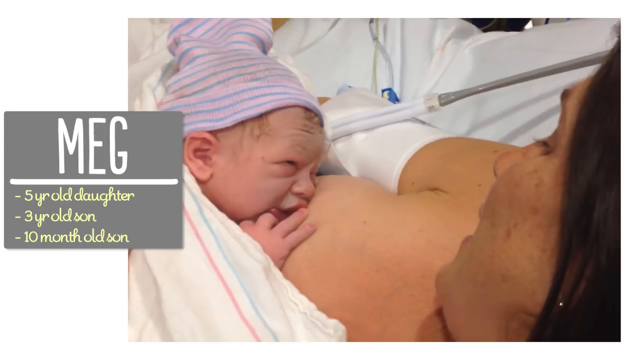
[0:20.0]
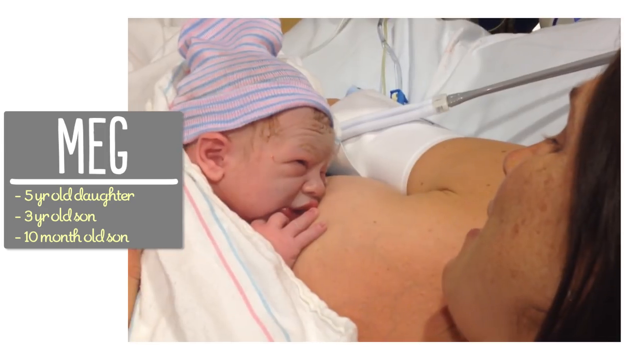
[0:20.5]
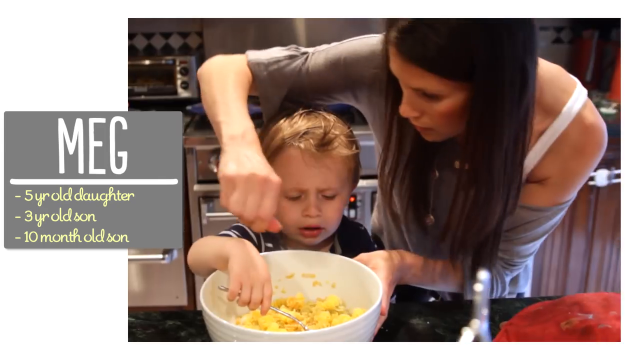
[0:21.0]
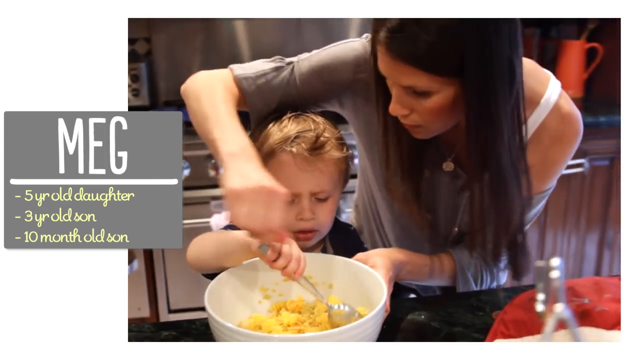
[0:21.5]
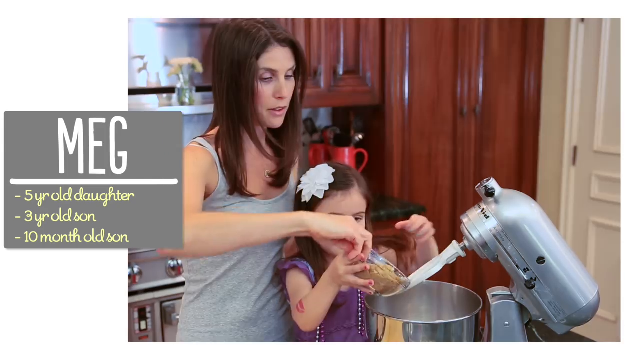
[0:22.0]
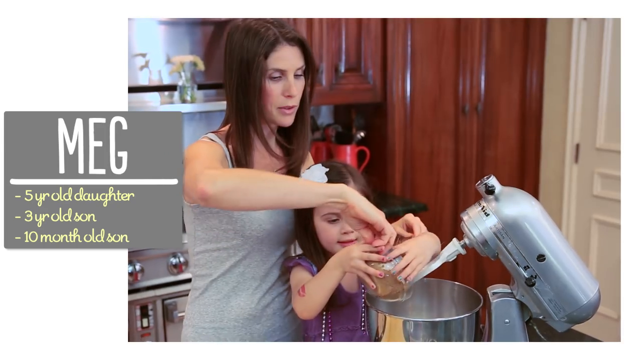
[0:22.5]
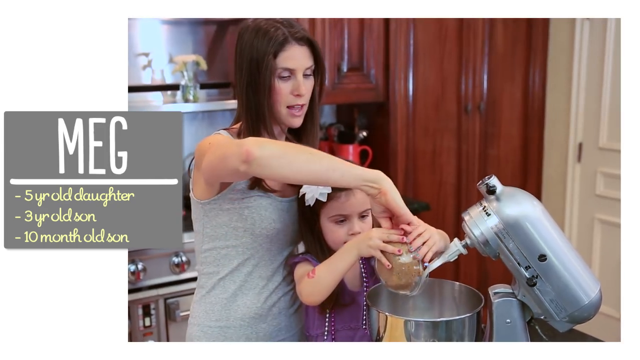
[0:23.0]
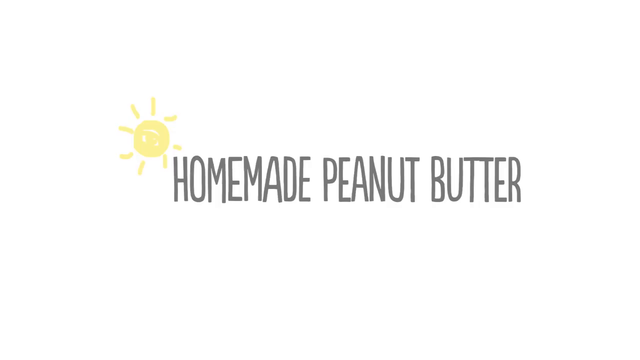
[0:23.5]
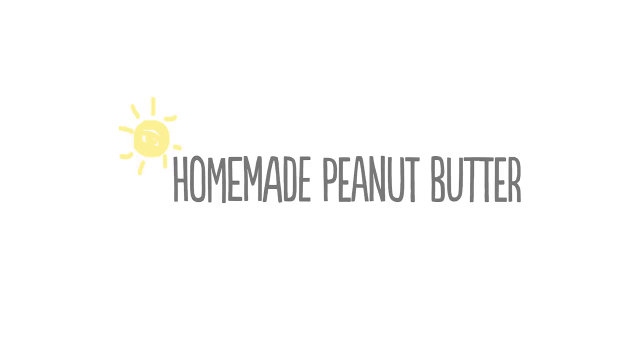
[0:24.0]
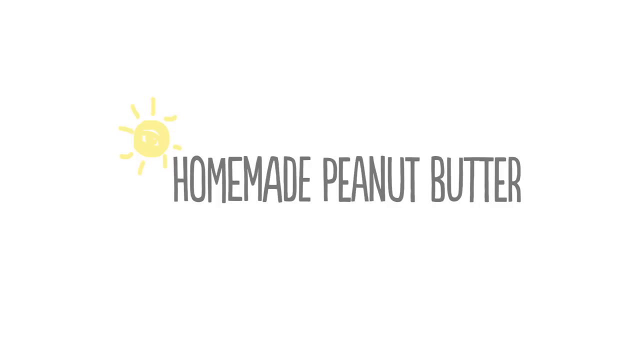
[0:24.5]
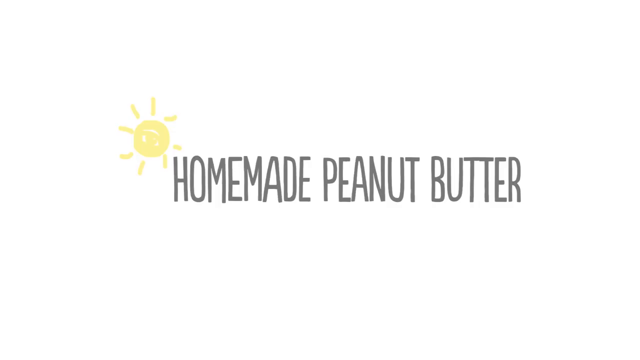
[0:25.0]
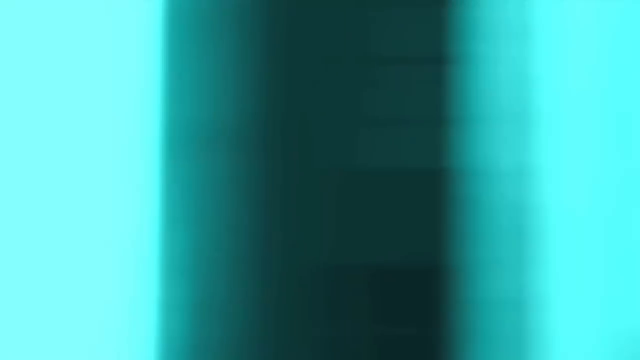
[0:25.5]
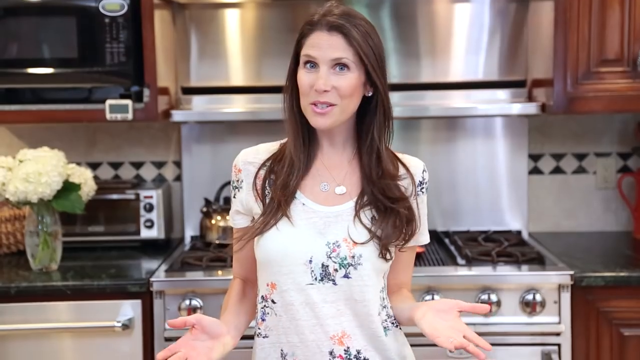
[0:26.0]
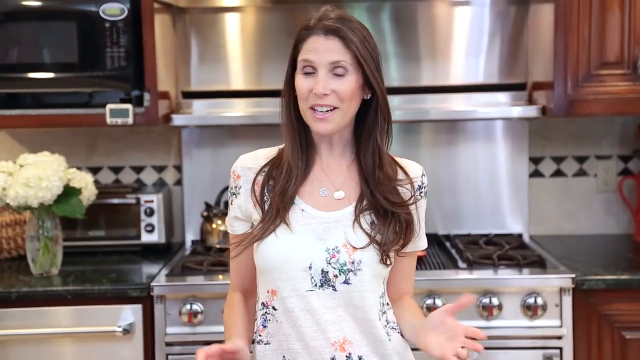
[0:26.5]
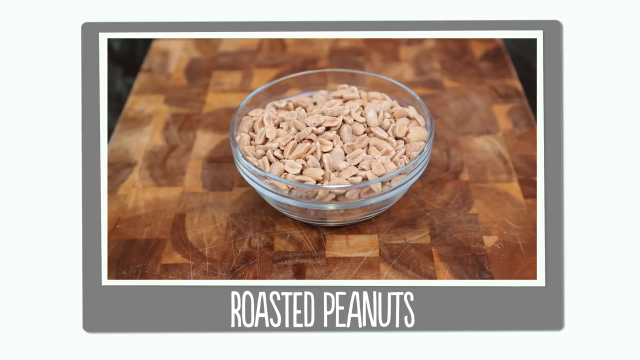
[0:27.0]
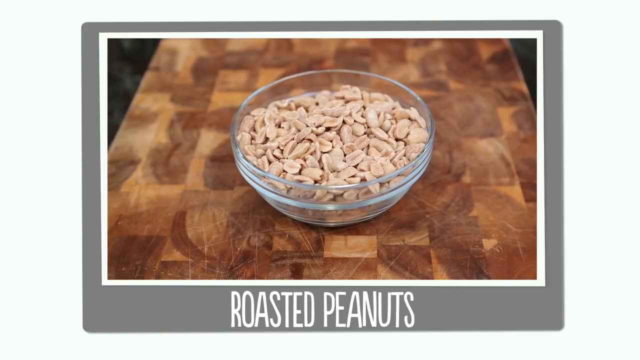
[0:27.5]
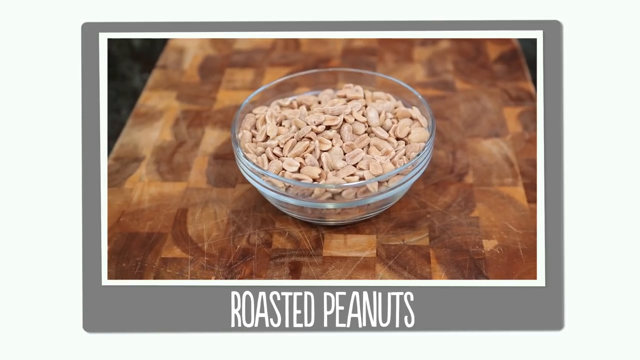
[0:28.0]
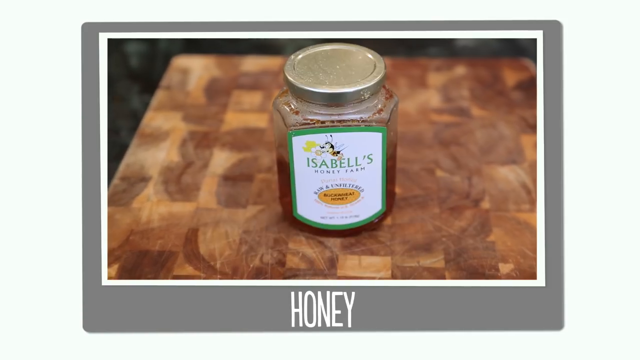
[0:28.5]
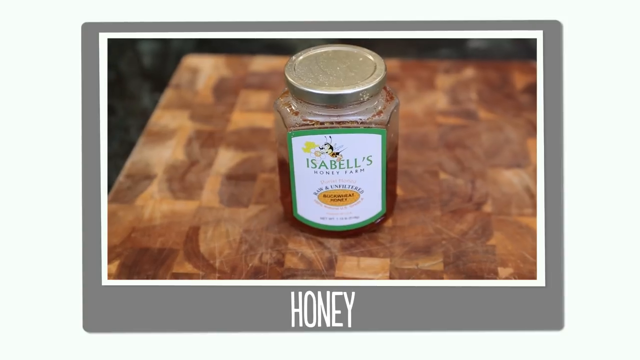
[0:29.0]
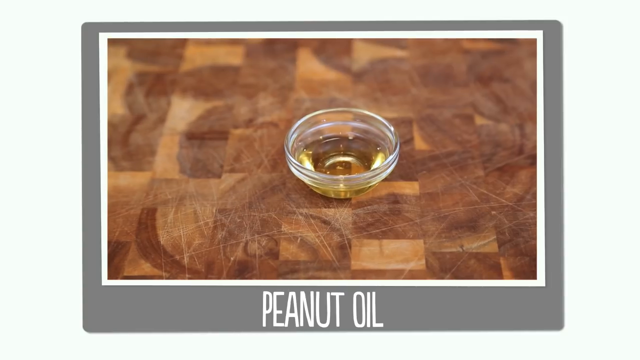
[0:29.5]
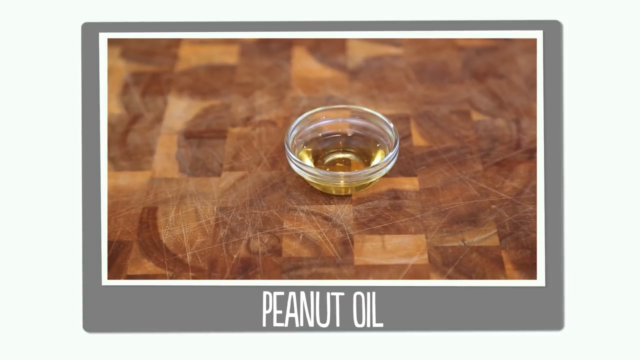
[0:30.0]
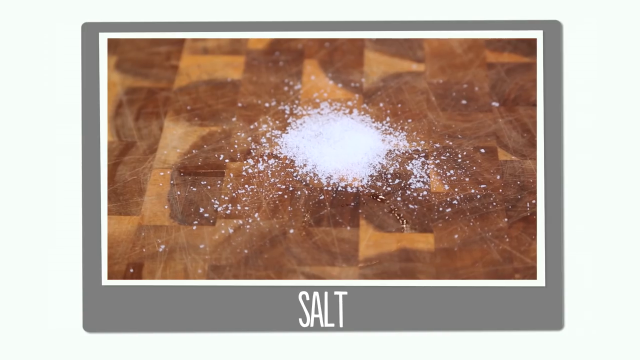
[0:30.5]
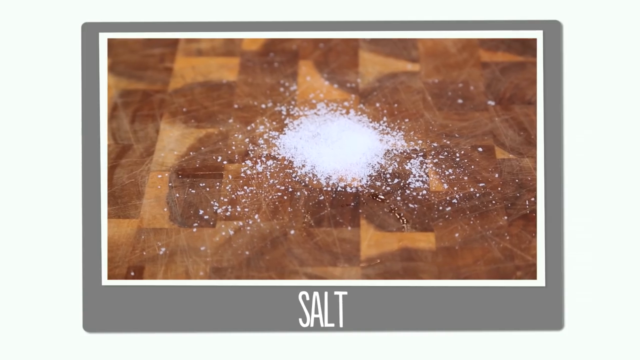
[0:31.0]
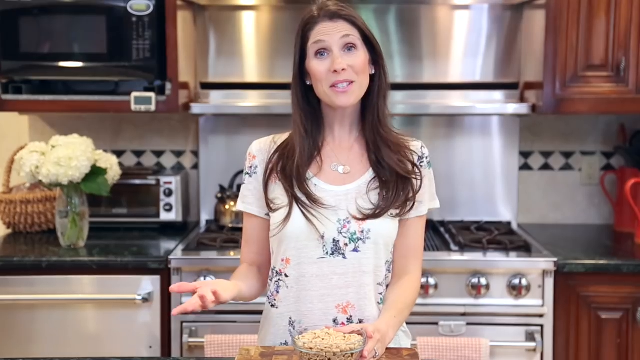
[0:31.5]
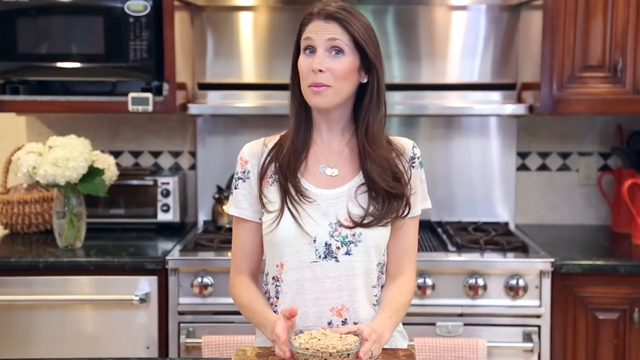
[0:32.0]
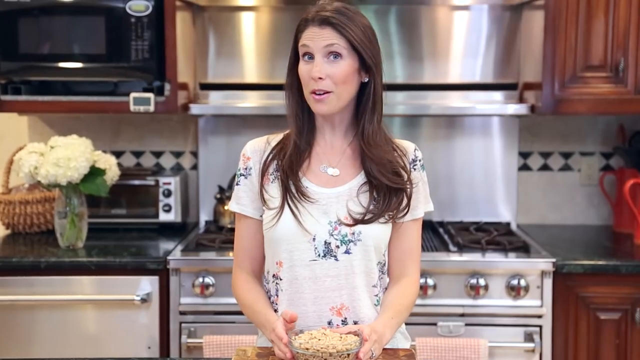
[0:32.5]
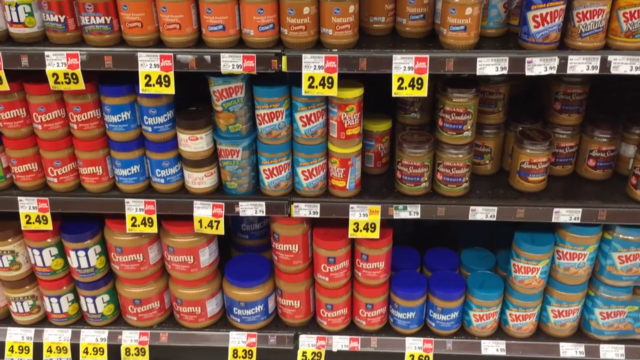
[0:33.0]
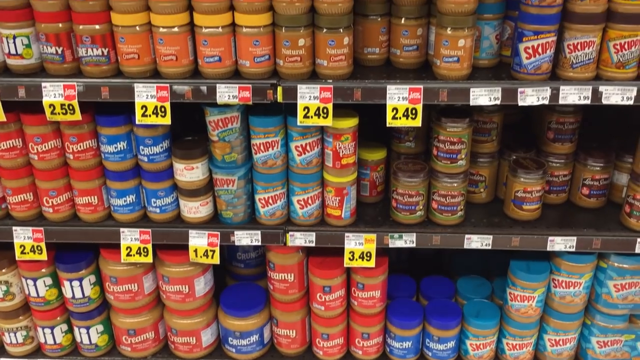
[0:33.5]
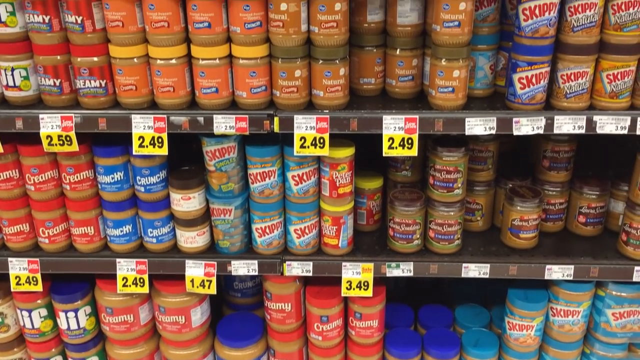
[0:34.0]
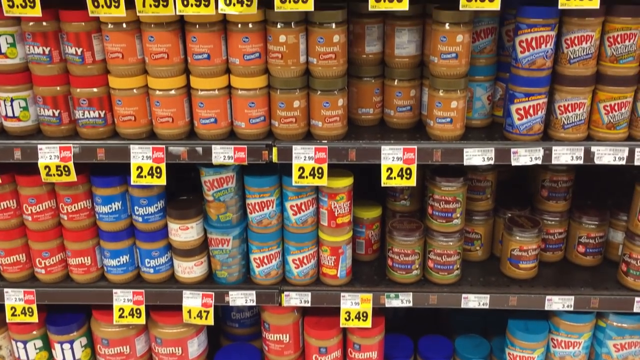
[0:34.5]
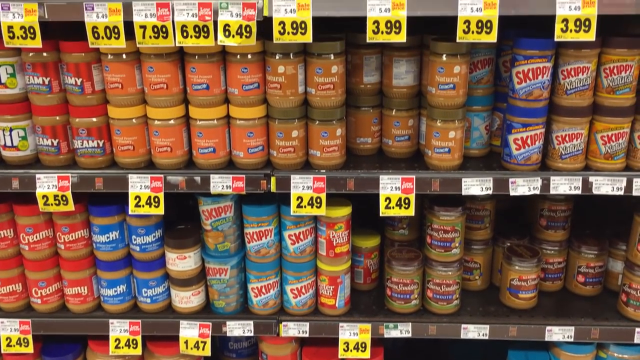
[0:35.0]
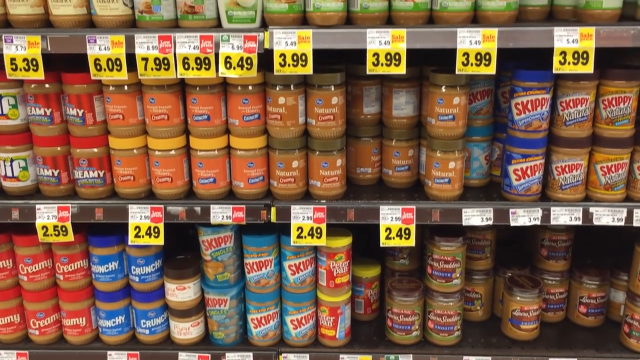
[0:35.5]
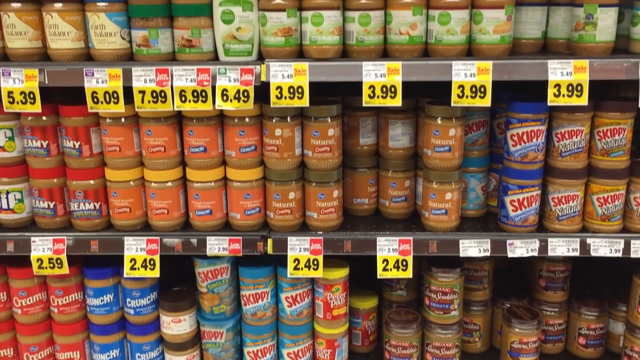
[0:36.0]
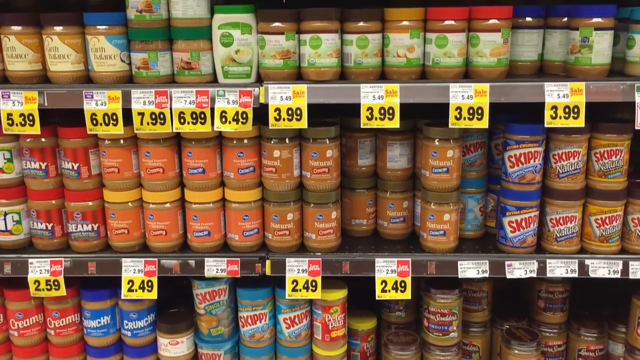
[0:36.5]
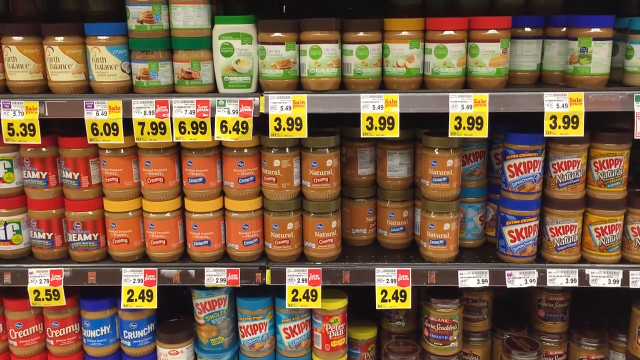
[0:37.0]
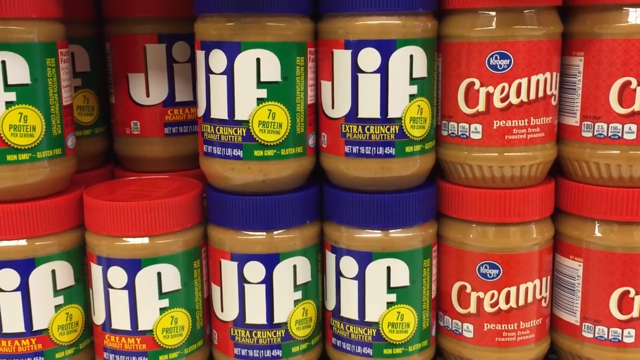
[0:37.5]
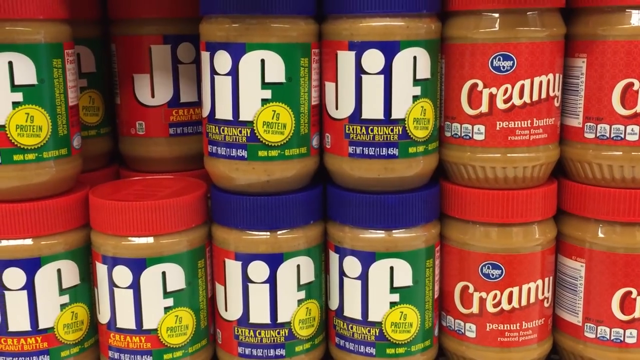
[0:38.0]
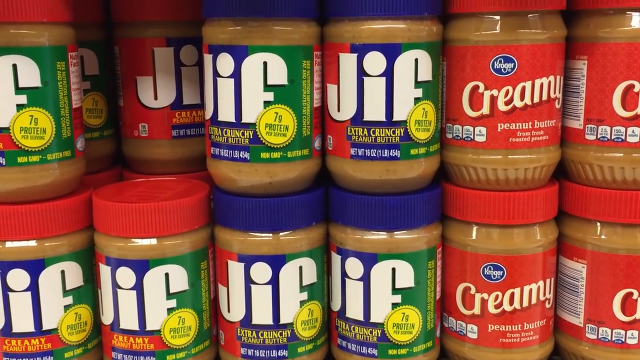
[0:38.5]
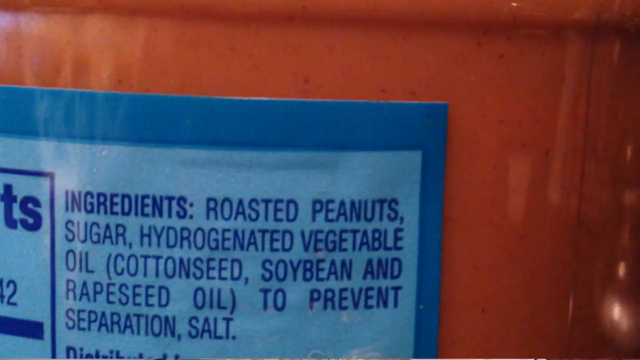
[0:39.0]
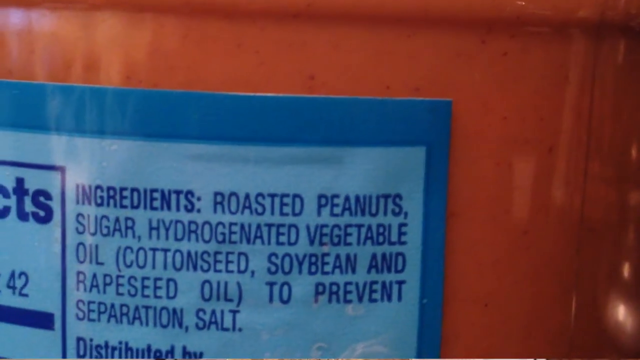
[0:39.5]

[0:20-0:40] What appears to be a newborn baby wears something on its head striped in blue and pink. The mother lies on her back, and white surroundings suggest she is still in the hospital. The baby sleeps on top of her breast, with a white blanket over it. In the top left corner is a text box with "MEG" written in white, a straight line below it, and below that text in a whitish-green color reading "a five-year-old daughter", then "a three-year-old son", then "ten-month-old son". The scene then returns to the woman's kitchen. She now wears a gray half-sleeved t-shirt, and on the right-hand side part of her shoulder shows a white stripe running up it. She helps what appears to be her son whisk and mix what appears to be a flour mixture.